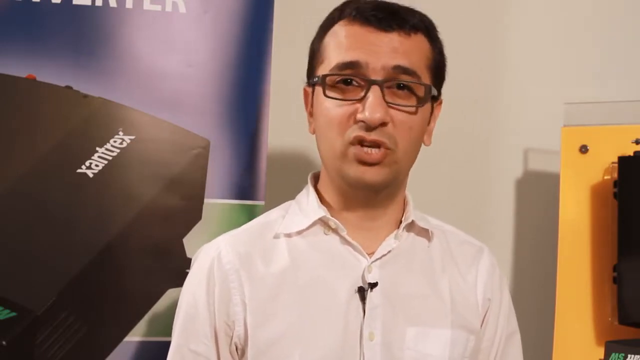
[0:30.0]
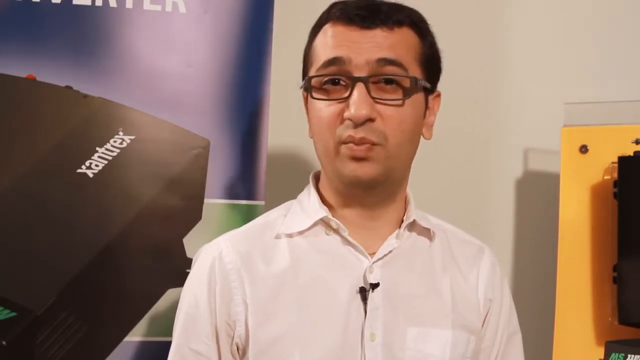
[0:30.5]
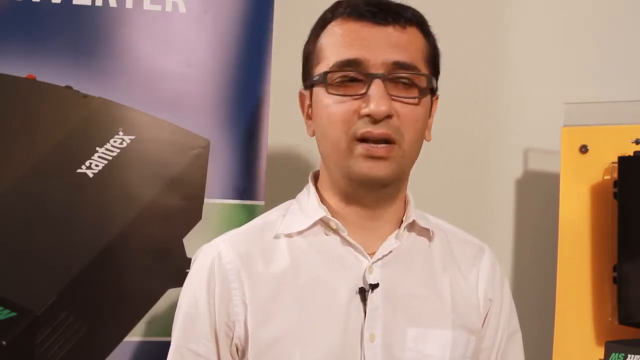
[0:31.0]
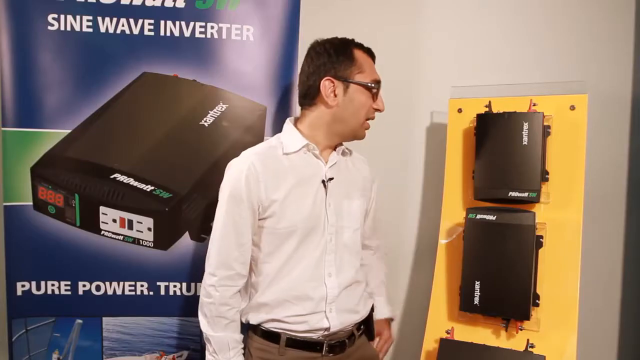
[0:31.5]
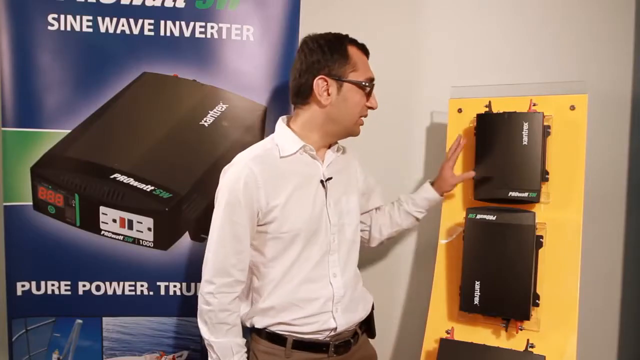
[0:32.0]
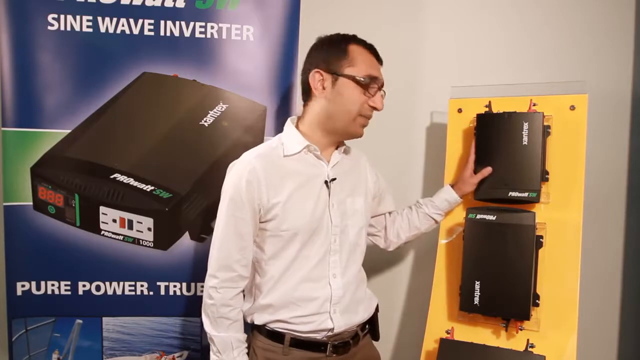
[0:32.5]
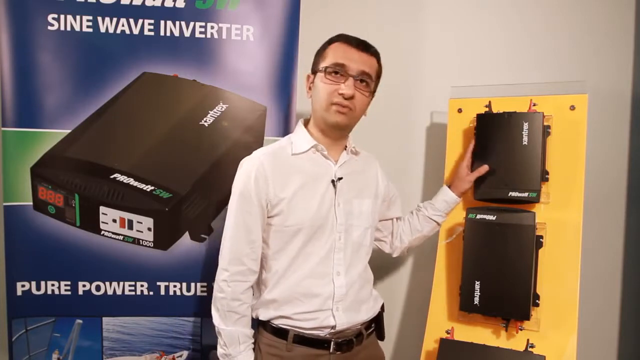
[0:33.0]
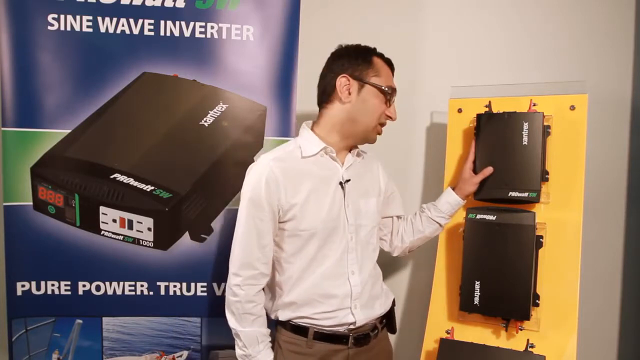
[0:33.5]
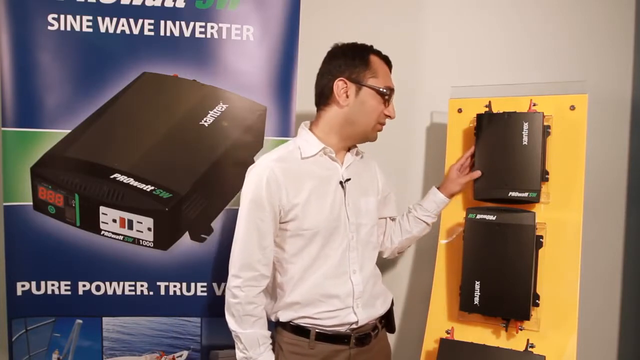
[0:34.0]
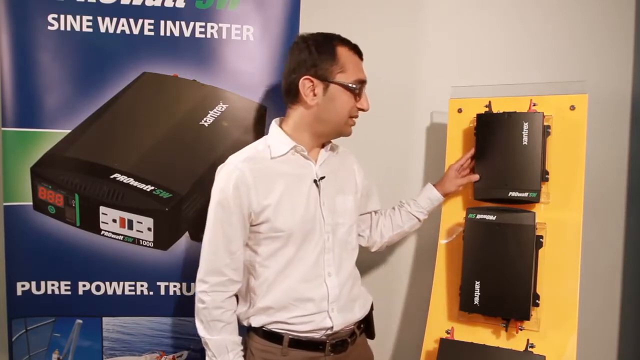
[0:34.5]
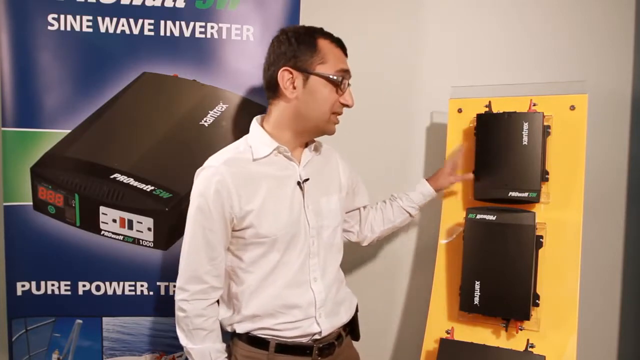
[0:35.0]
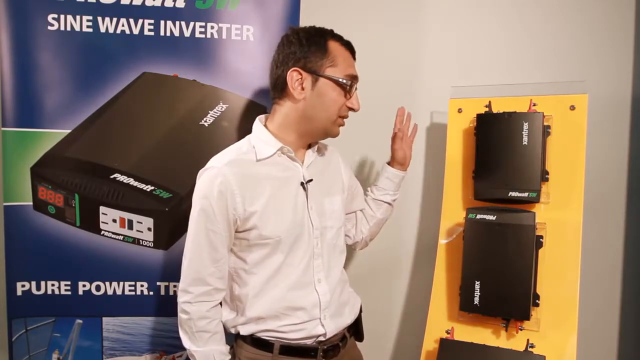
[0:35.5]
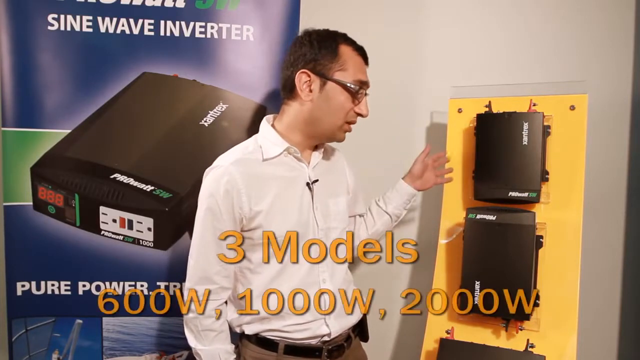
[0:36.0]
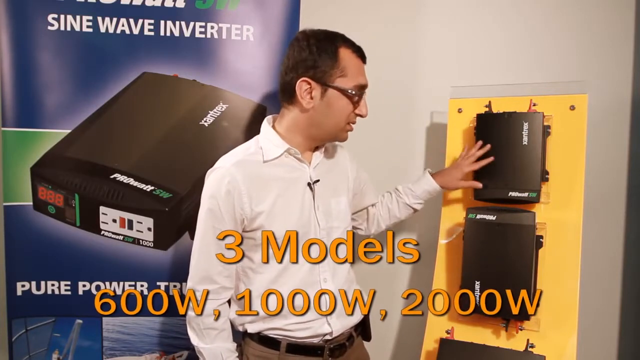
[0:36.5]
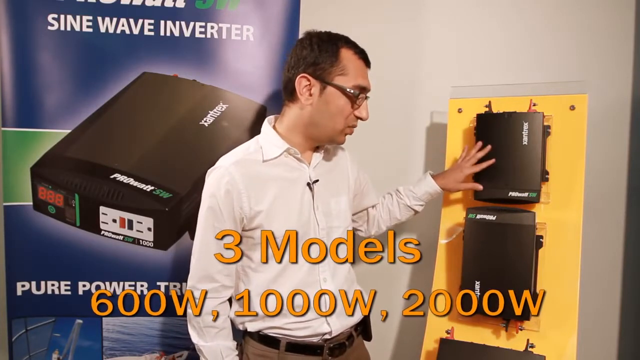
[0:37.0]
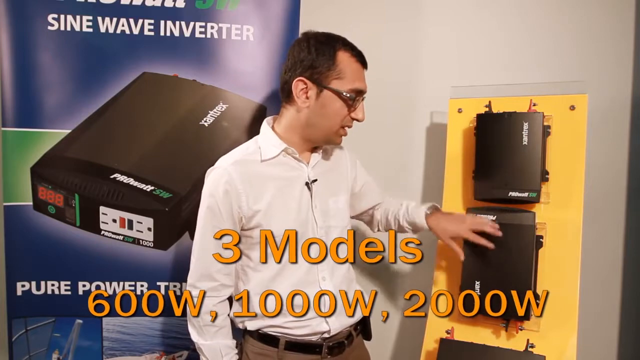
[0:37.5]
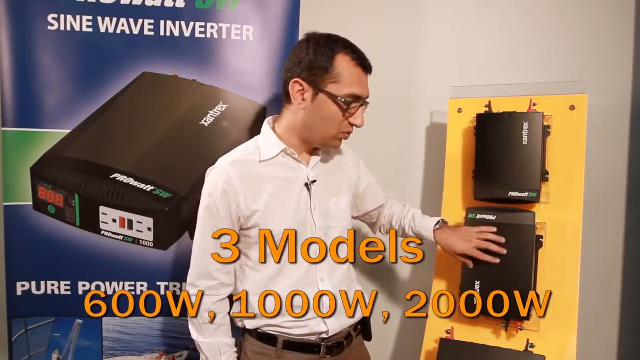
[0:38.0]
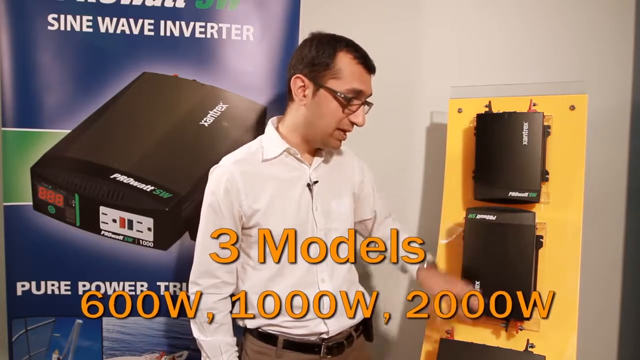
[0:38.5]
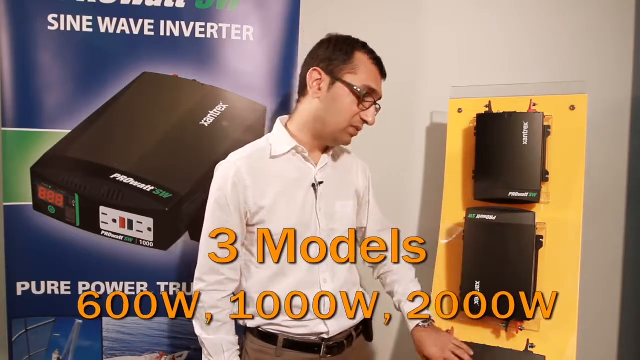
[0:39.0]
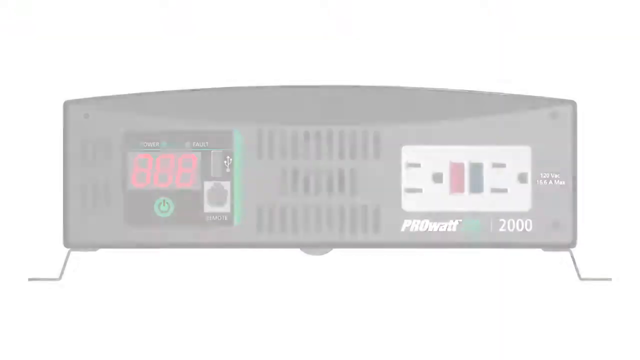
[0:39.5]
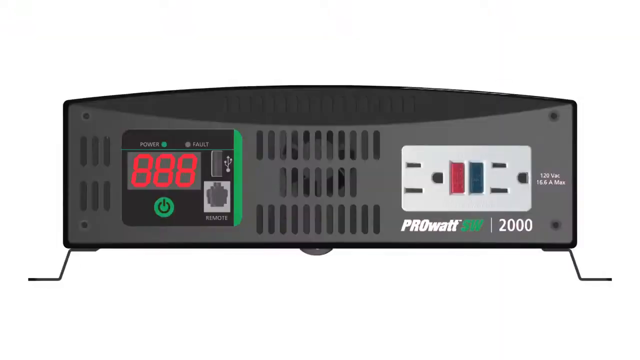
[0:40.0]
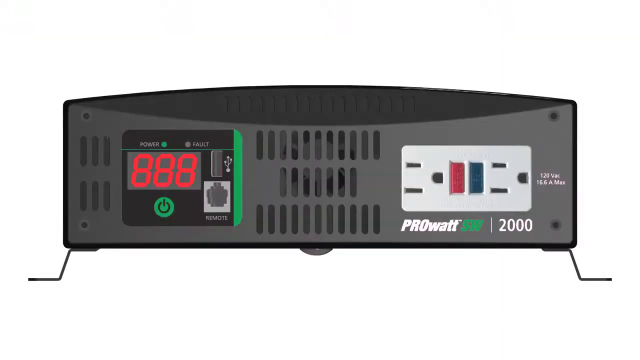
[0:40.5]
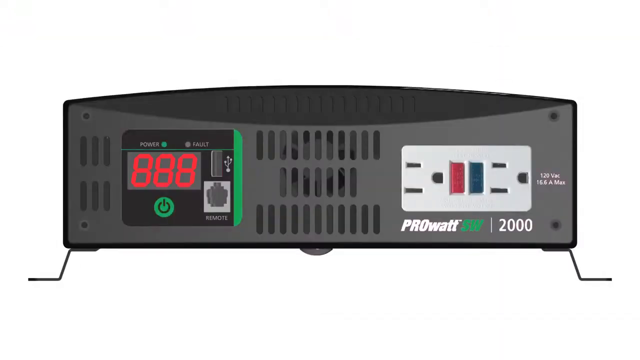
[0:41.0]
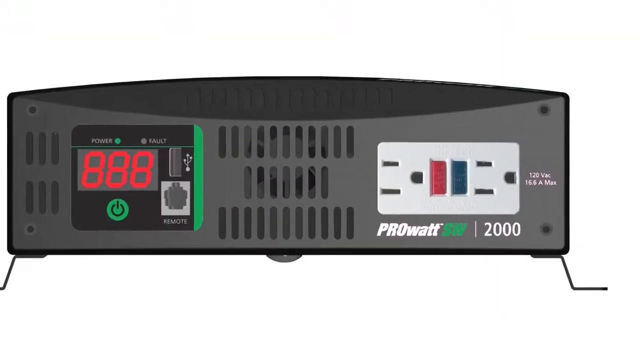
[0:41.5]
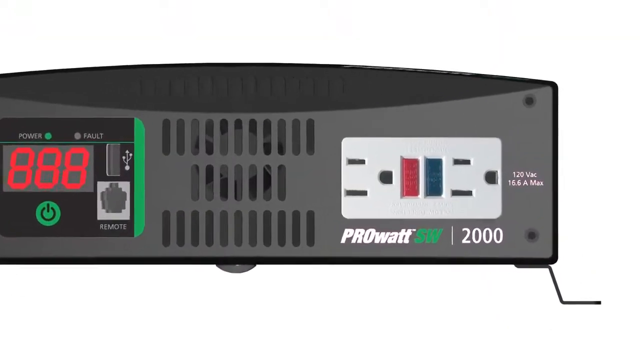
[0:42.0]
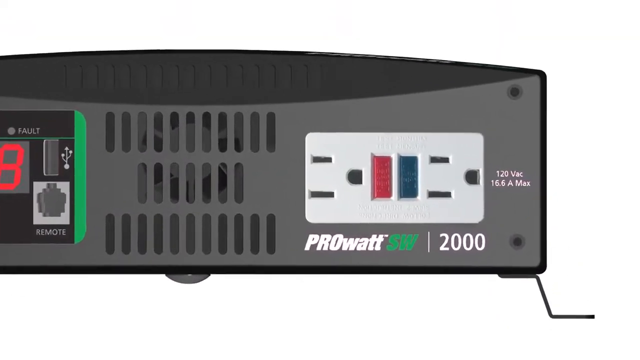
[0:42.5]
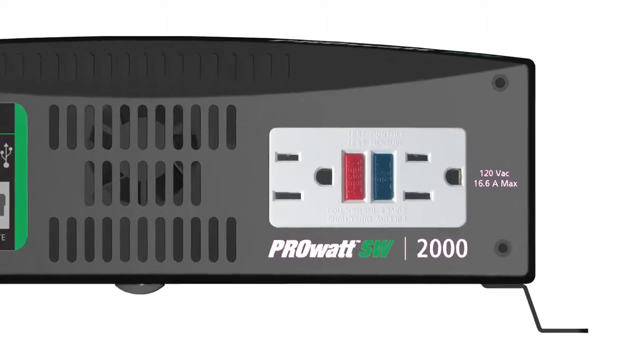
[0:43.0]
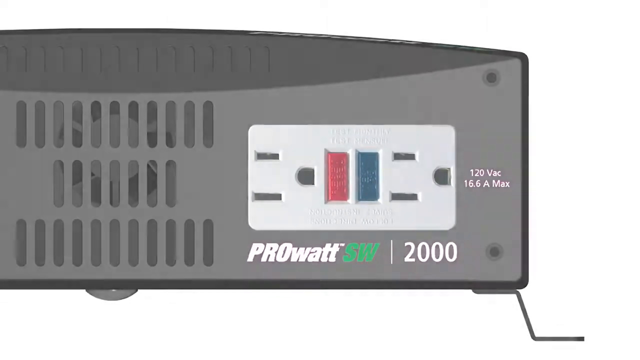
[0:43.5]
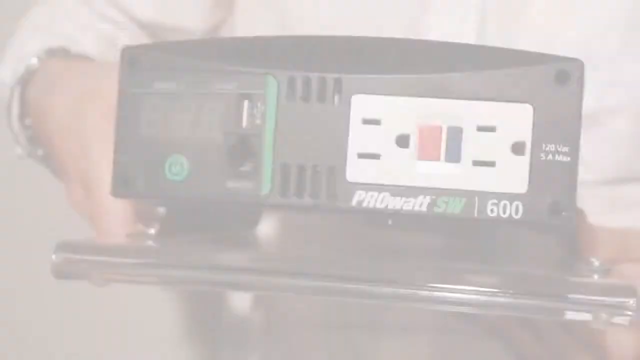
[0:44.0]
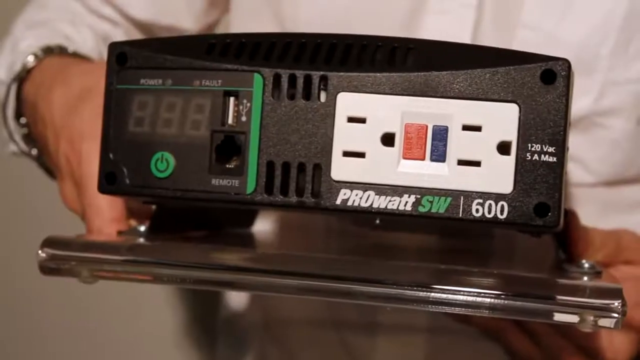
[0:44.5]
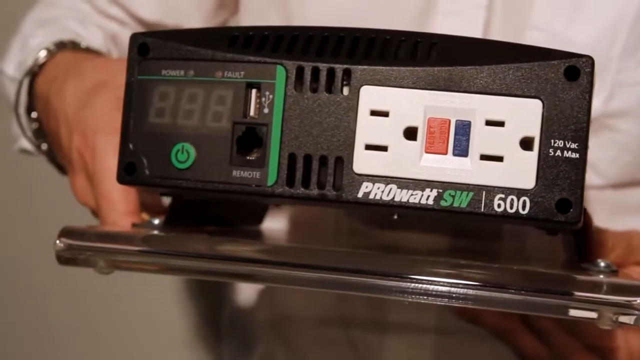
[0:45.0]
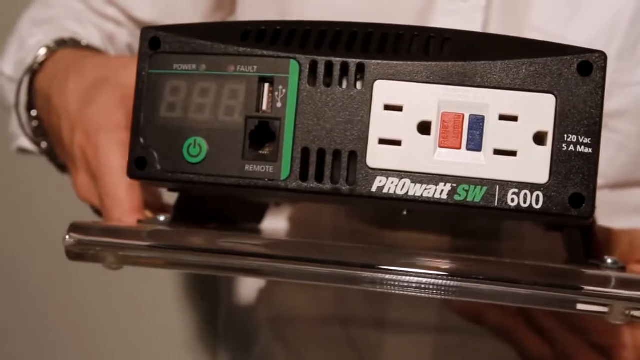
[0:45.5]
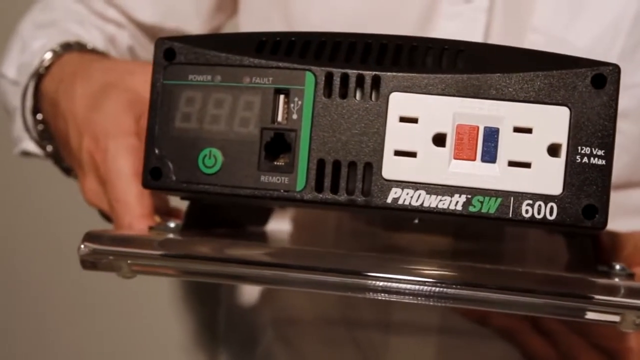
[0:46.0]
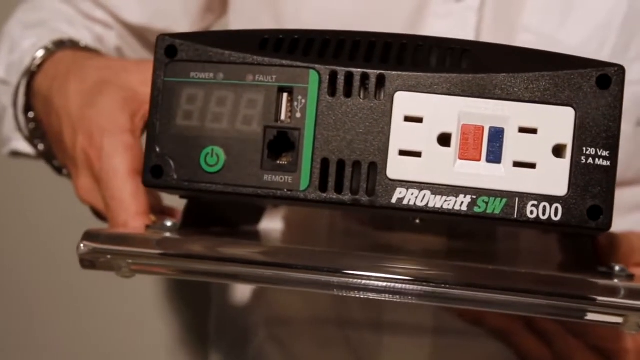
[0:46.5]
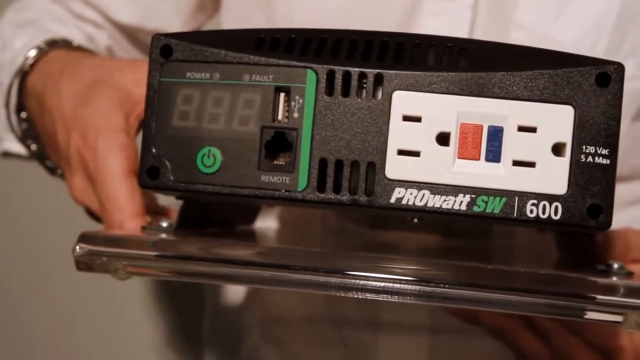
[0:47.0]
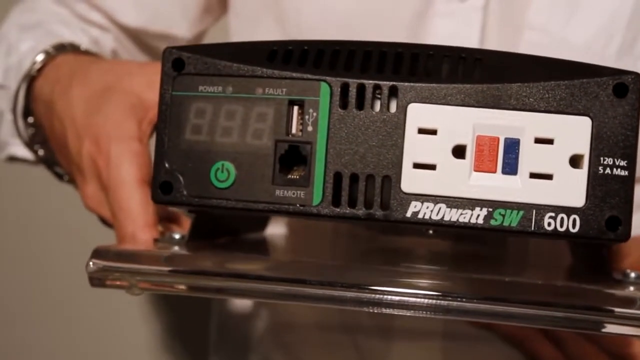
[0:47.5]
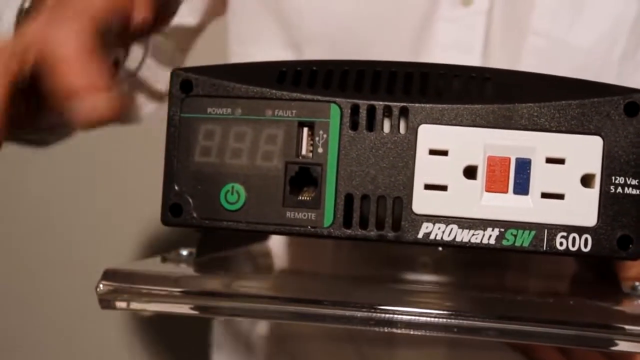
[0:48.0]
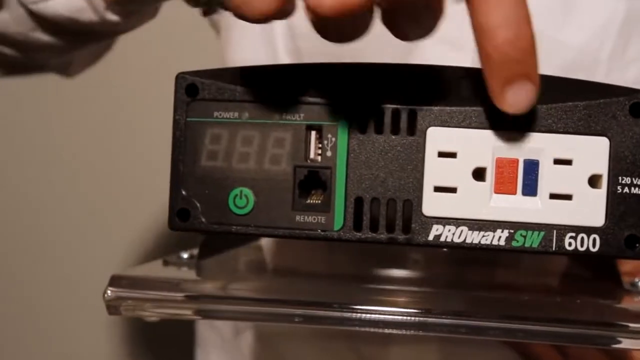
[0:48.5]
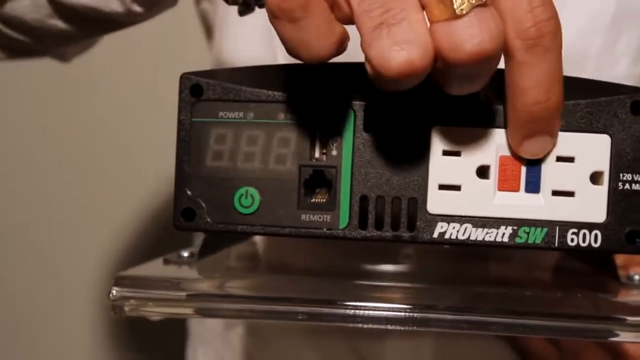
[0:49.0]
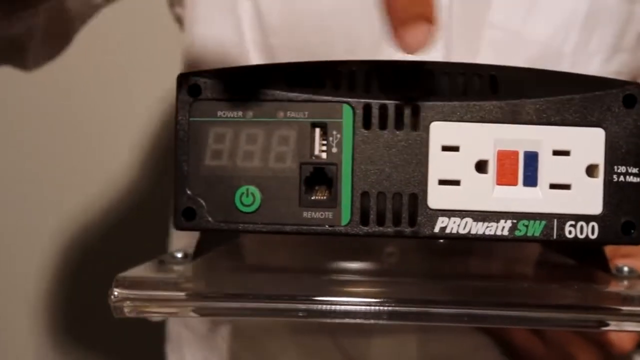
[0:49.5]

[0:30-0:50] A man with light brown skin, glasses and black hair stands talking. On the left side of the frame is the Xantrex poster, and on the right is a yellow board with some wave inverters attached to it. He wears an olive shirt with a microphone on it. As he talks, he reaches up with his left hand, touches one of the Xantrex wave inverters and looks at it. Orange text appears at the bottom reading "three models, 600 watt, 1000 watt, 2000 watt." The video then shows the back of the device: on the right are two places for a three-pronged plug and a black and red GFI button to push in case it gets tripped. Below that it says "ProWatt SW 2000," and "120" appears on the right. There is an open part through which air can go out or come in, and the fan is visible on the other side. On the left are a power light, three digits reading "888," a power sign, a USB port and a remote port. The camera zooms in to show "120 VAC, 16.6 A max." Next, a man holds a model attached to a platform and shows its back side while talking. With the index finger of his right hand he points to the three-pronged power plug and specifically the black GFI dot. He wears a gold ring on his middle finger.